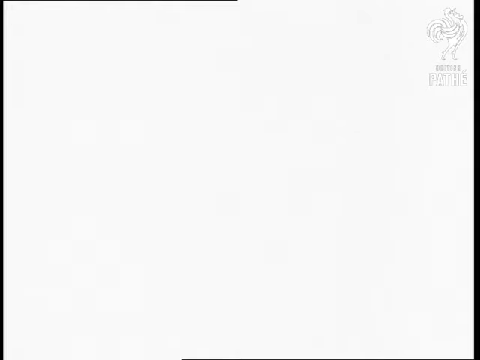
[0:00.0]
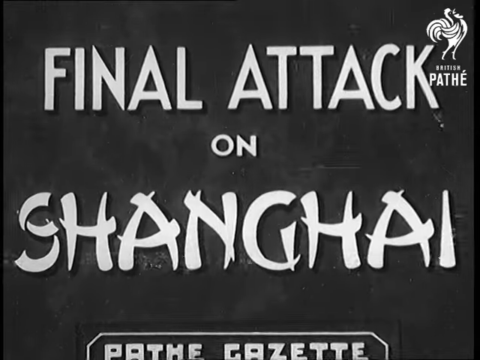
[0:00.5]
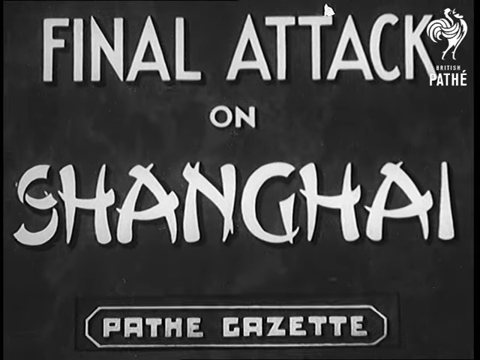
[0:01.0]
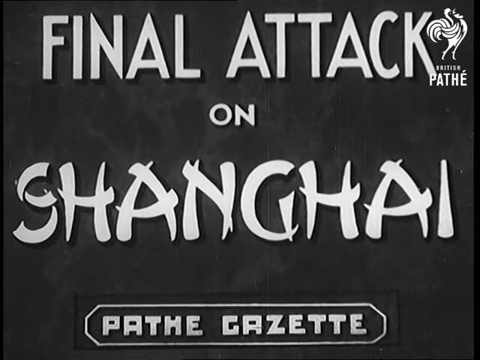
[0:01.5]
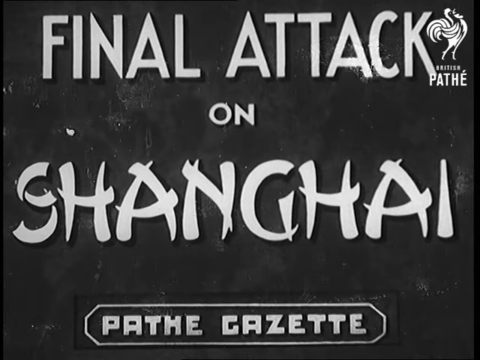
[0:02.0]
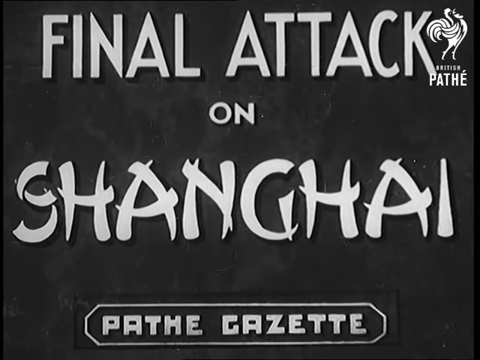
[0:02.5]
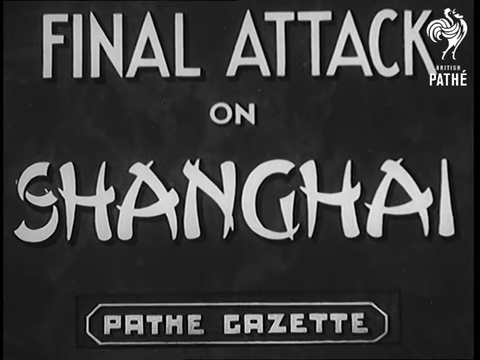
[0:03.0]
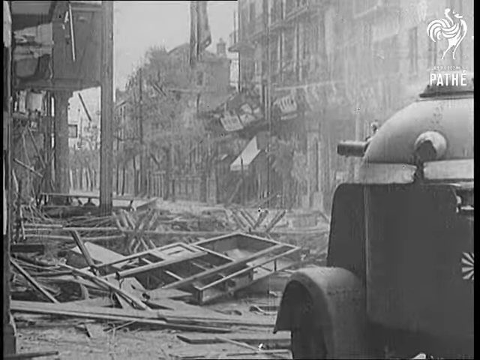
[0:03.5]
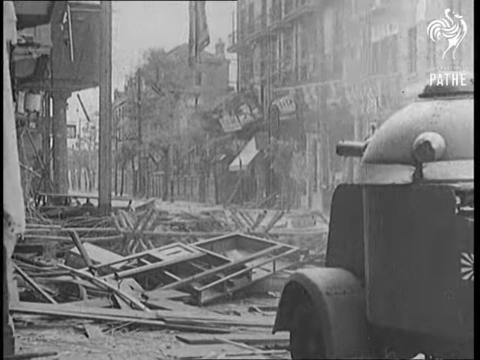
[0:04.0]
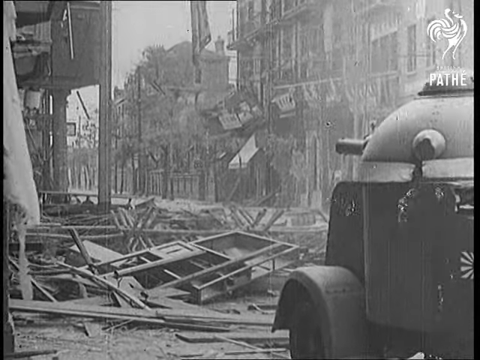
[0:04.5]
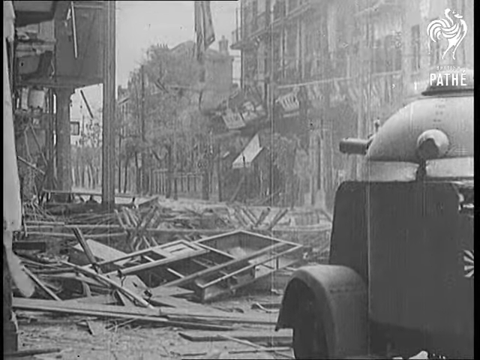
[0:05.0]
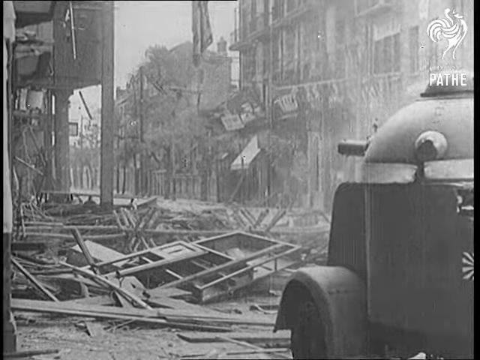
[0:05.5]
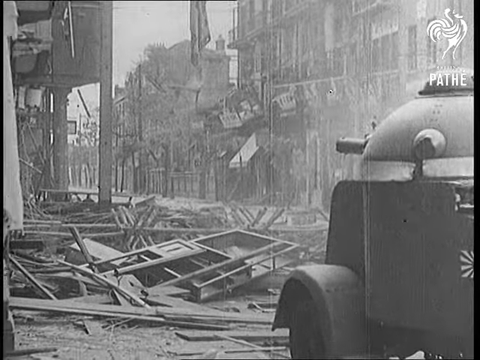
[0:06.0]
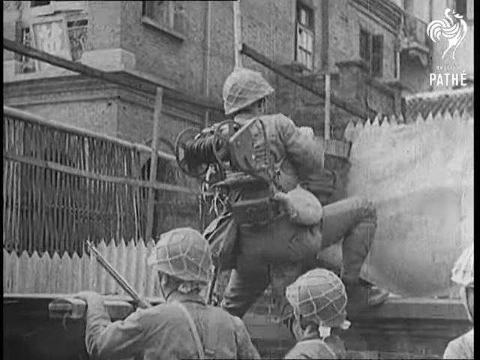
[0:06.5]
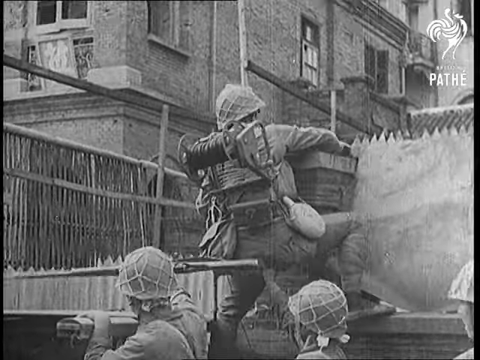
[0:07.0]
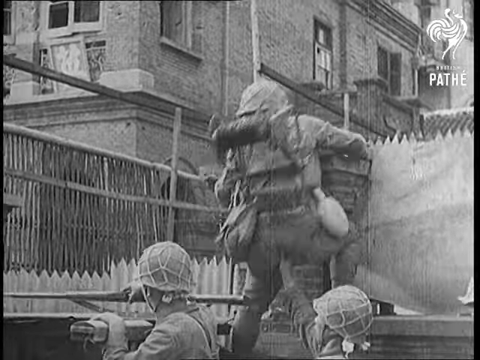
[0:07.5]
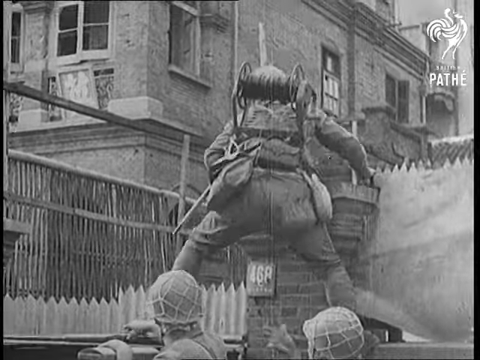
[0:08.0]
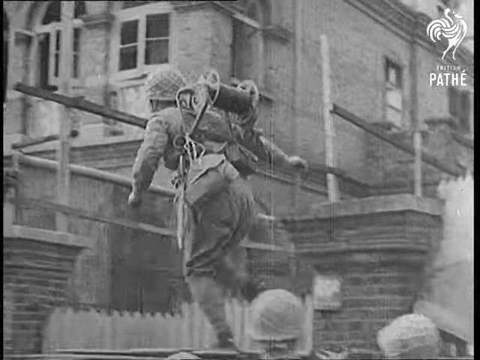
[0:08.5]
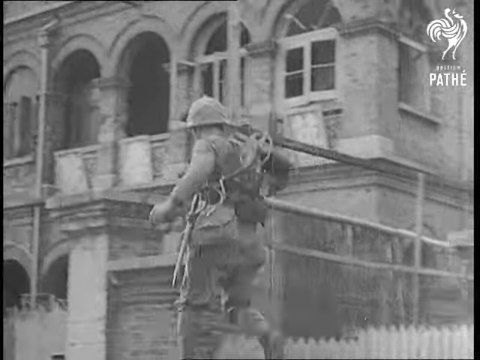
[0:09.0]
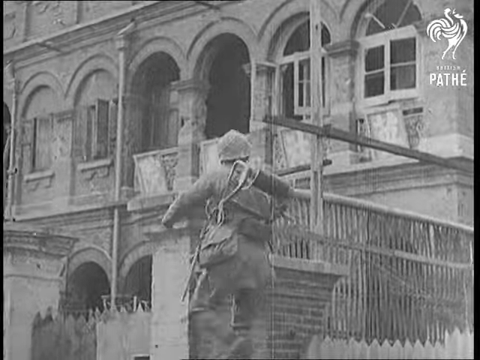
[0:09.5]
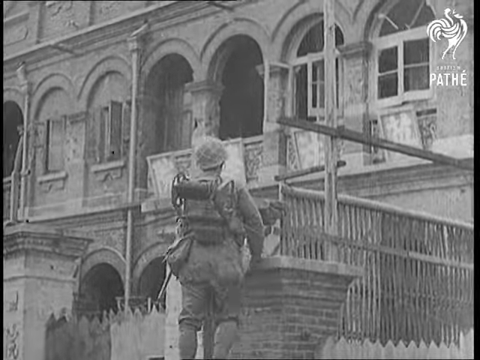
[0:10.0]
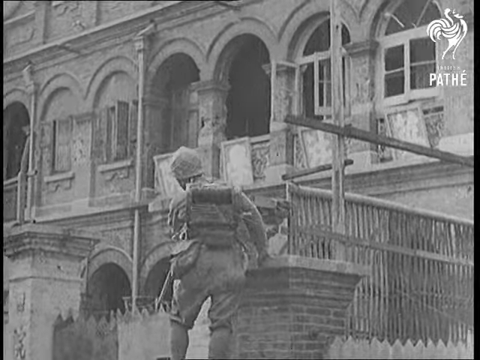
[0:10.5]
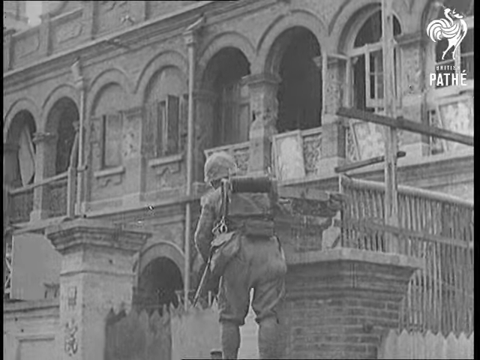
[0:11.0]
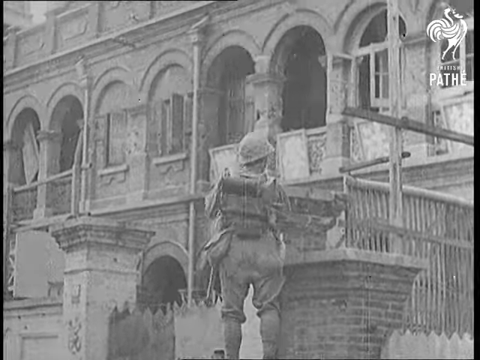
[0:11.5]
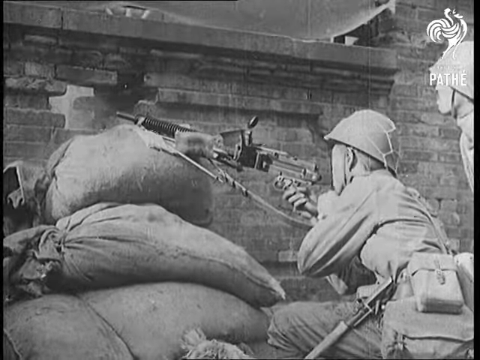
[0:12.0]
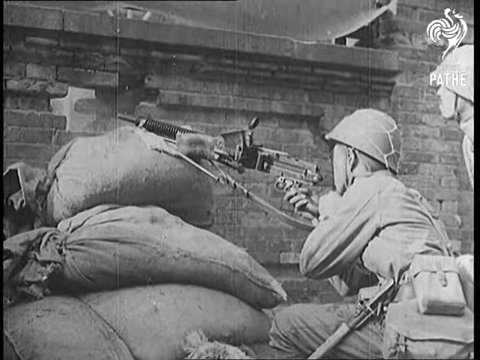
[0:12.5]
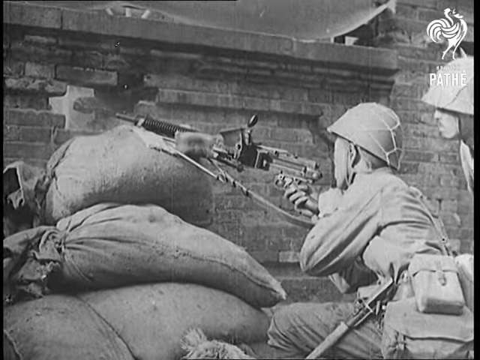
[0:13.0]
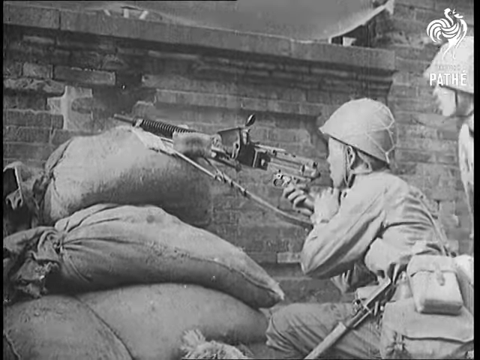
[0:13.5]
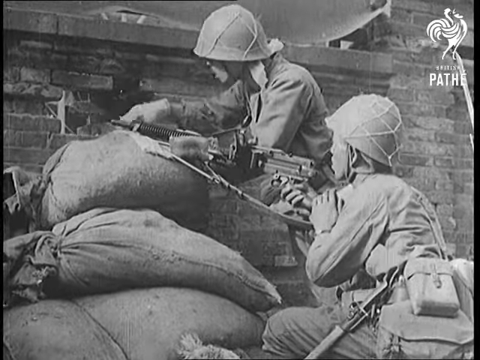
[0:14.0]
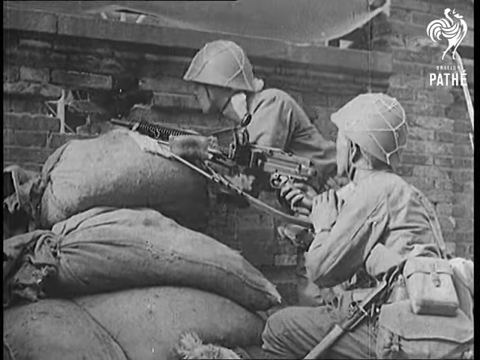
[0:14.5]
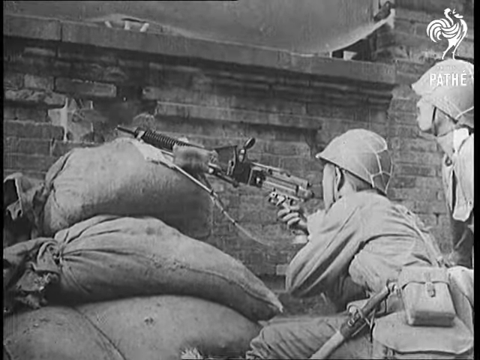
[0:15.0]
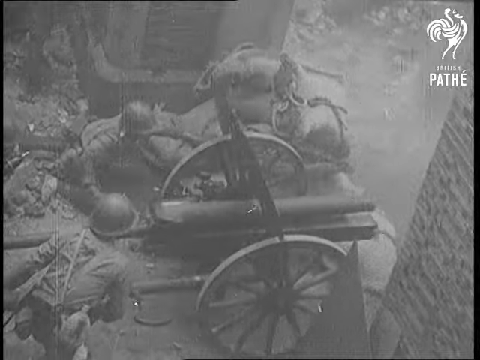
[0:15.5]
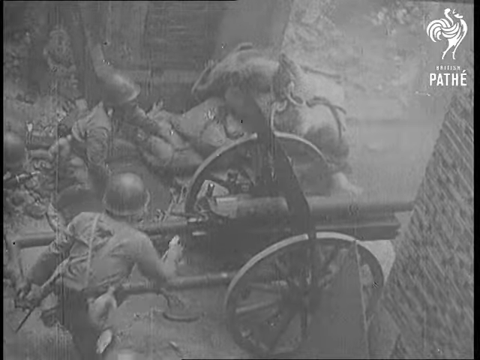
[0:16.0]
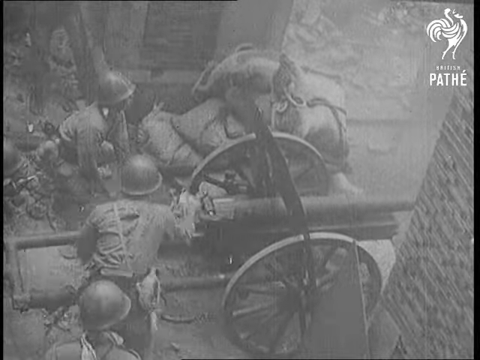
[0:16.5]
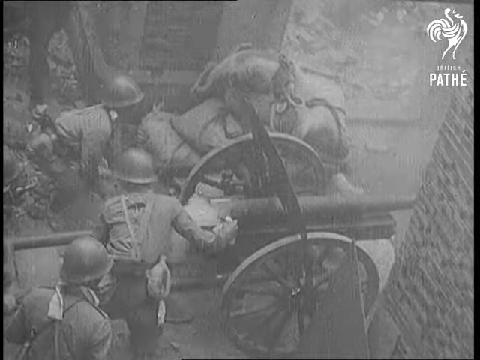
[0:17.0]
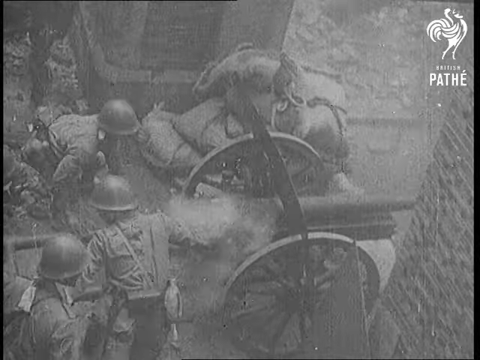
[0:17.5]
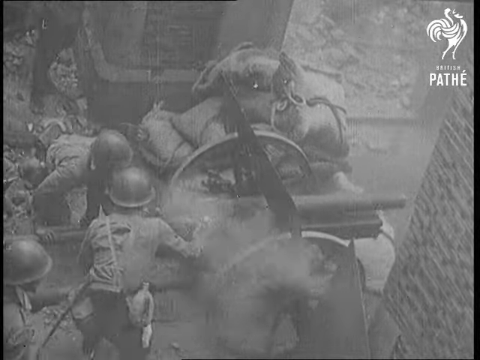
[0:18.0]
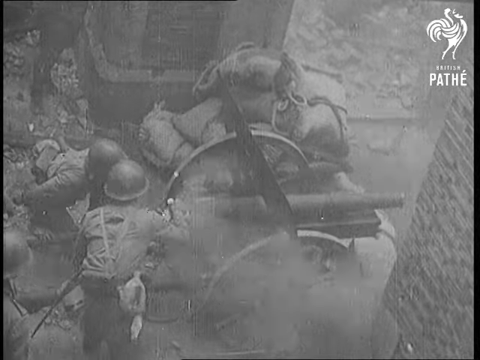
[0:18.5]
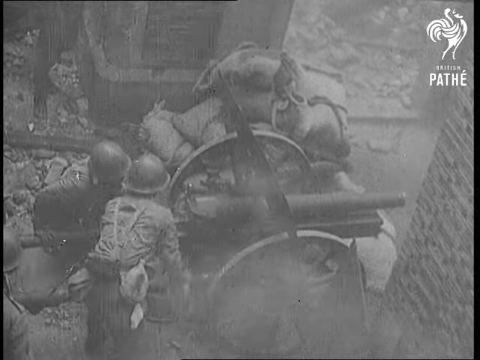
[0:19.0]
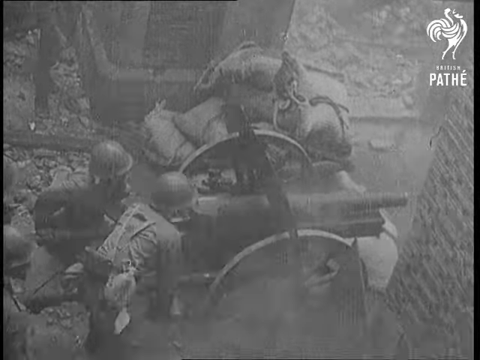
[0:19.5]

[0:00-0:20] A war scene opens on a black screen with white letters reading "the final attack on Shanghai"; "Shanghai" is written in calligraphy-type letters. At the bottom, "the path Gazette" appears in more block-style, outlined letters. The scene quickly switches to what looks like a destroyed city, with a lot of wood, smoke and destruction. Next, a soldier with a gun and a backpack climbs up on buildings. Then two soldiers with weapons are perched on what looks like sandbags, shooting their guns at something that cannot be seen, with bricks, maybe a brick wall, in front of them, amid a lot of smoke and destruction. The scene then switches to another set of soldiers fighting with what look like old-fashioned cannons on wheels, again amid smoke and destruction.